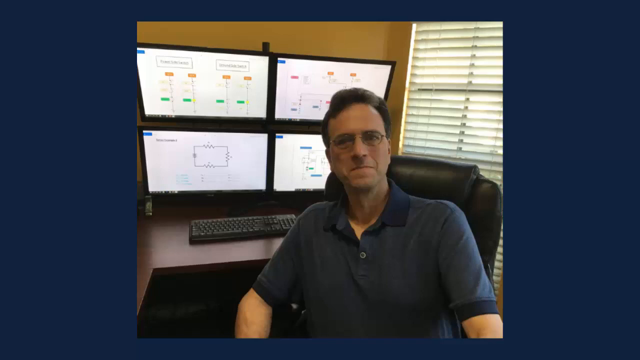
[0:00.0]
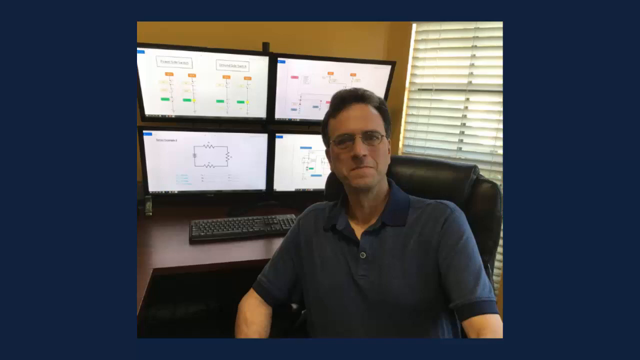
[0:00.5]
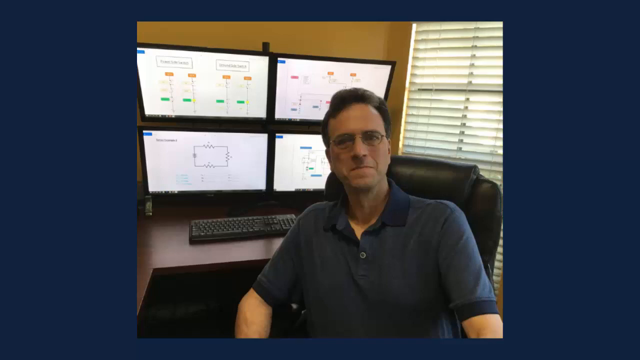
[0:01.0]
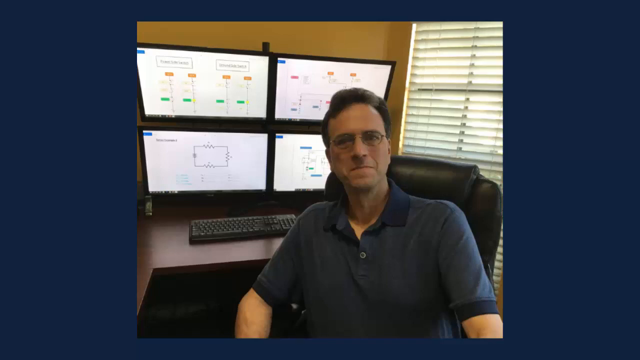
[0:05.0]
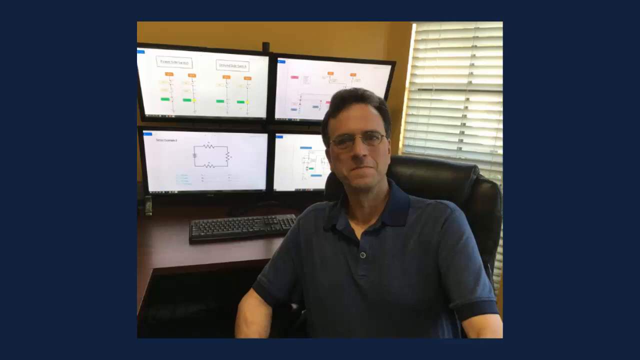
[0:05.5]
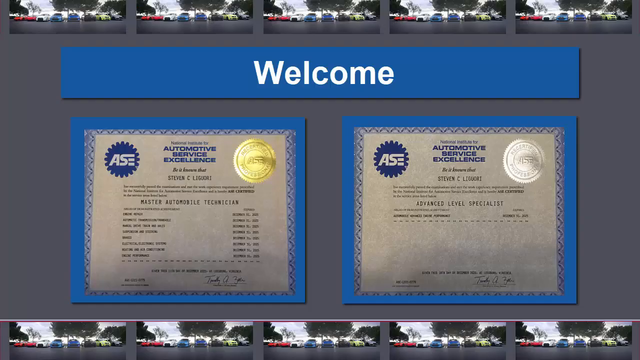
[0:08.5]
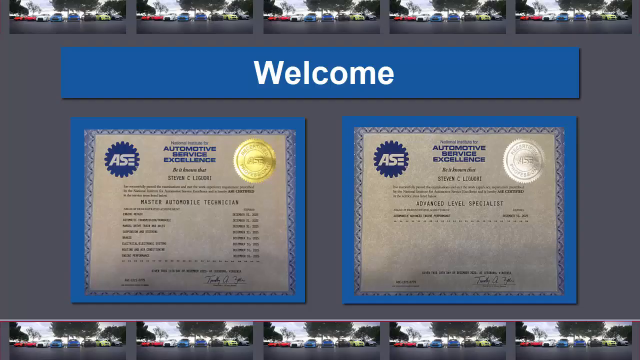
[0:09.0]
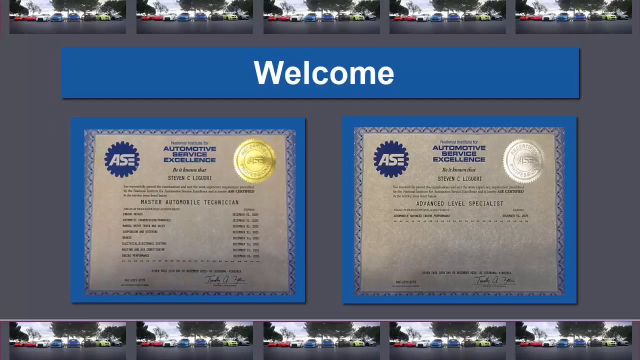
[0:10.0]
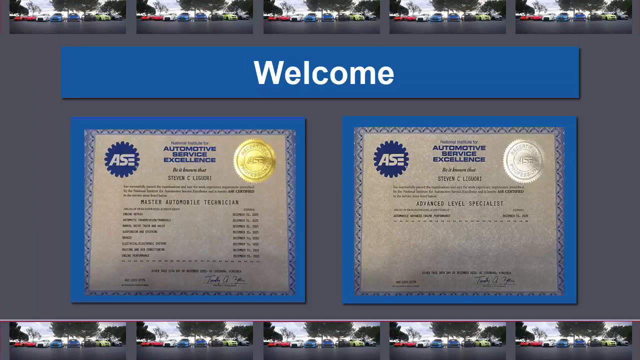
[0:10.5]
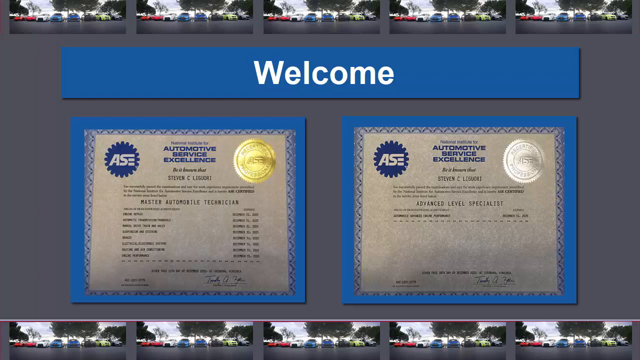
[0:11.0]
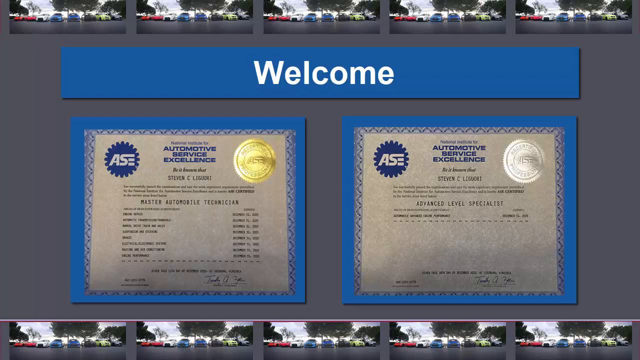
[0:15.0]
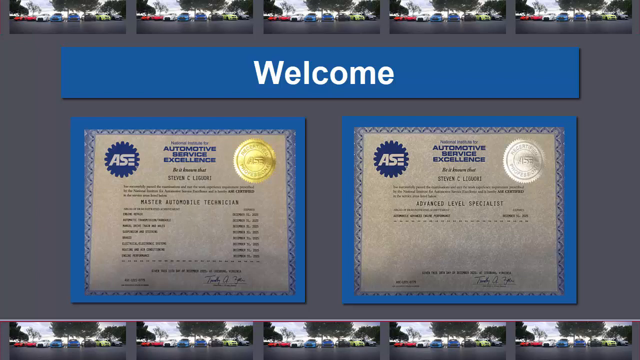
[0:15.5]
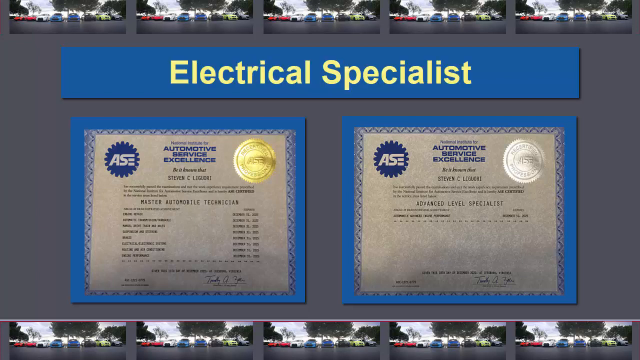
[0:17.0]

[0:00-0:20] The video opens with a blue border around a video of a man with four screens. The desk is brown, and there is a keyboard and a black chair. He wears a blue shirt and glasses and looks at the camera; the image is a freeze frame, and he is not moving. Next, an SAE certification certificate appears with the word "welcome." It has a blue border, with "automotive service" in blue lettering and everything else in black lettering; these are certificate diplomas. A gray background follows, with nothing else going on, and then the view returns to the man. The still photograph of him is now surrounded by a blue background. His computer monitor screens show orange and green colors on a white background. He looks like a man in his late 40s or early 50s, with blackish brown hair.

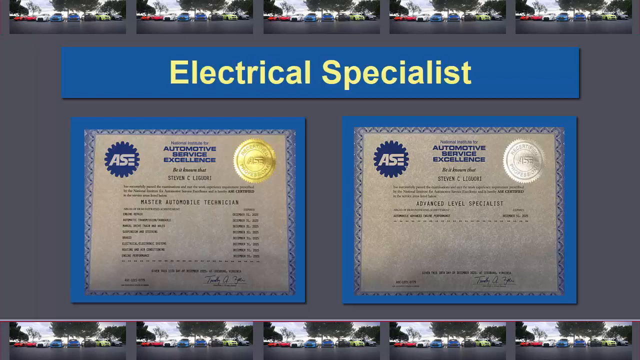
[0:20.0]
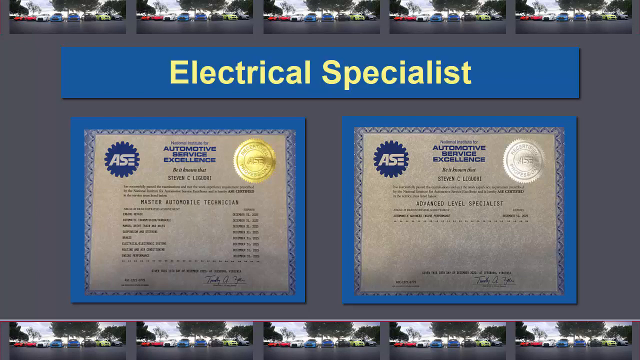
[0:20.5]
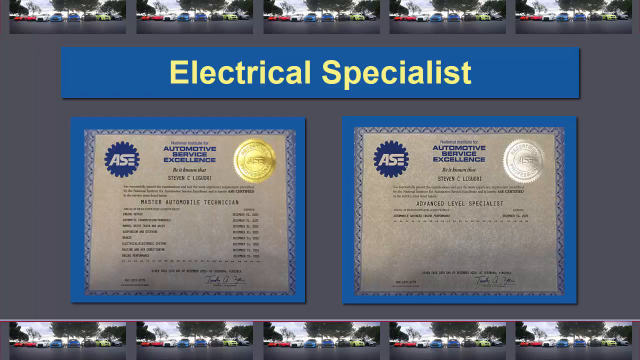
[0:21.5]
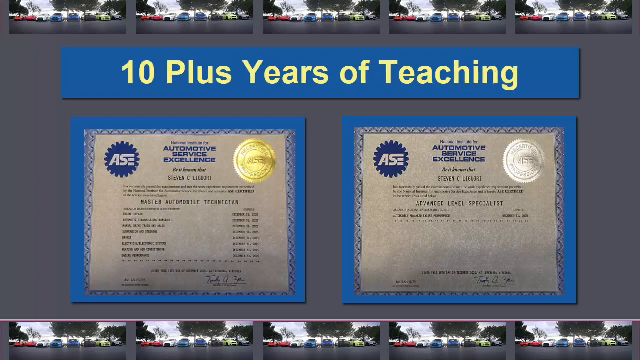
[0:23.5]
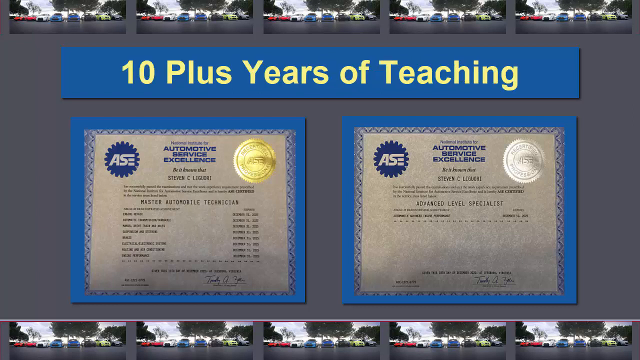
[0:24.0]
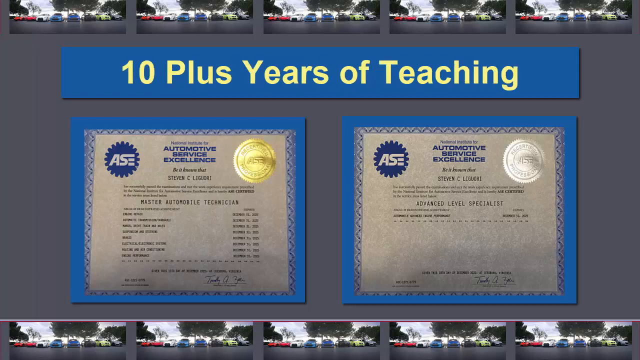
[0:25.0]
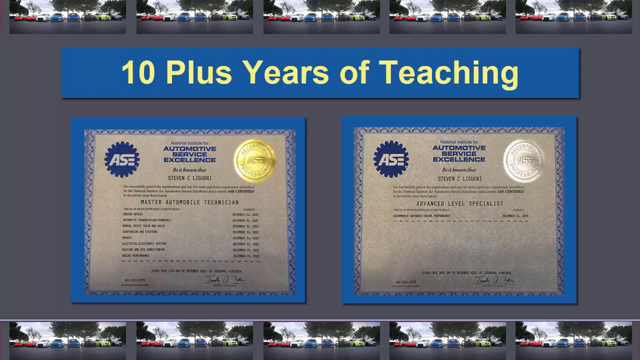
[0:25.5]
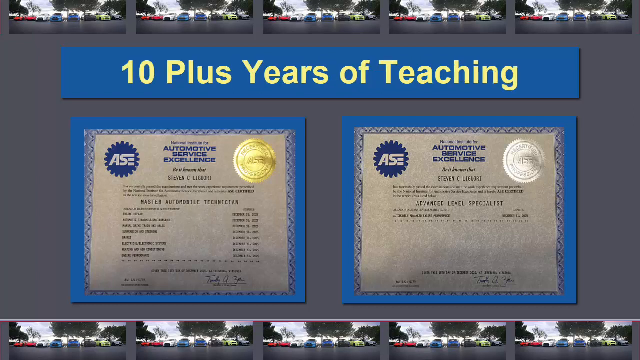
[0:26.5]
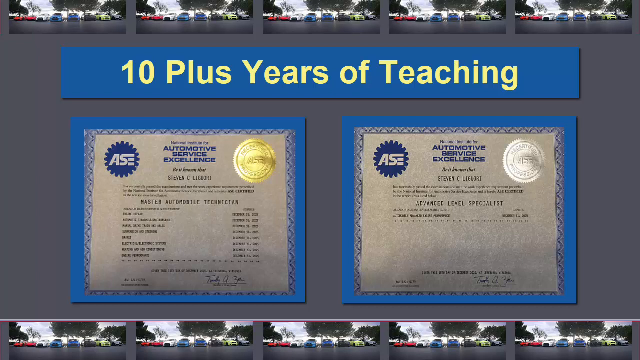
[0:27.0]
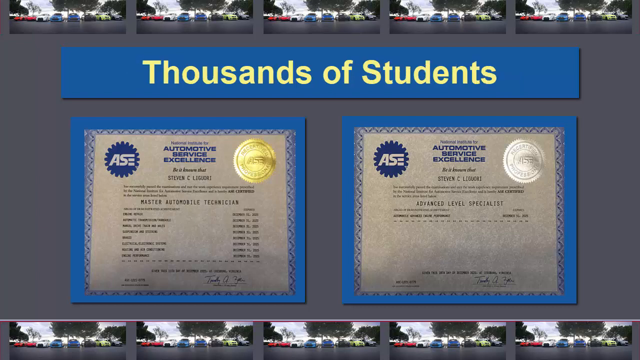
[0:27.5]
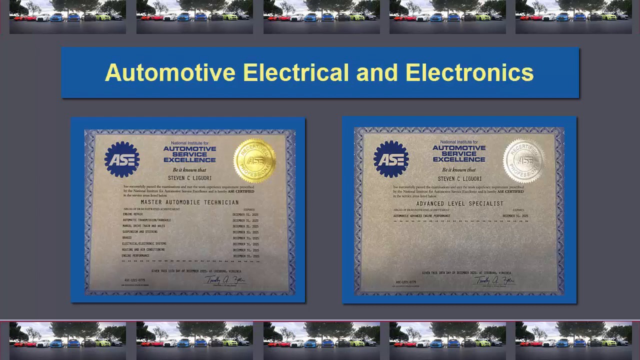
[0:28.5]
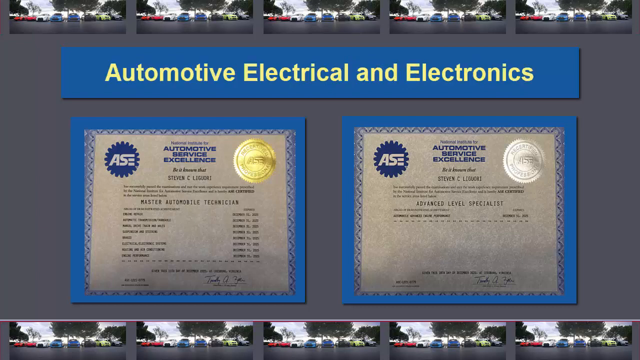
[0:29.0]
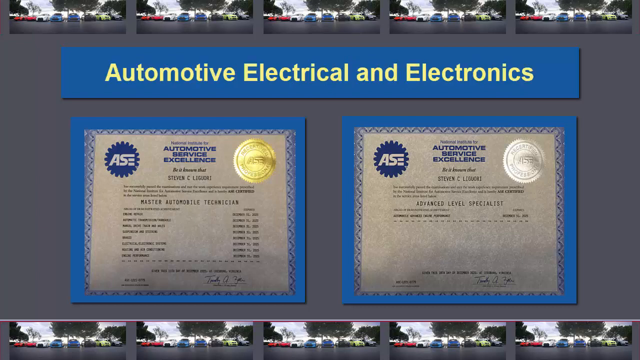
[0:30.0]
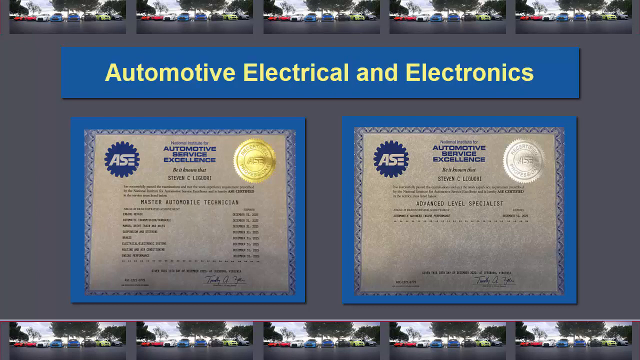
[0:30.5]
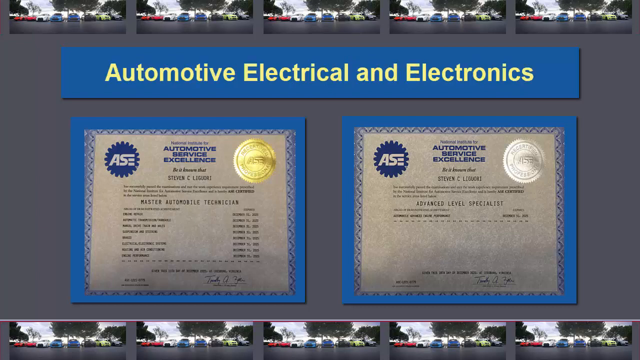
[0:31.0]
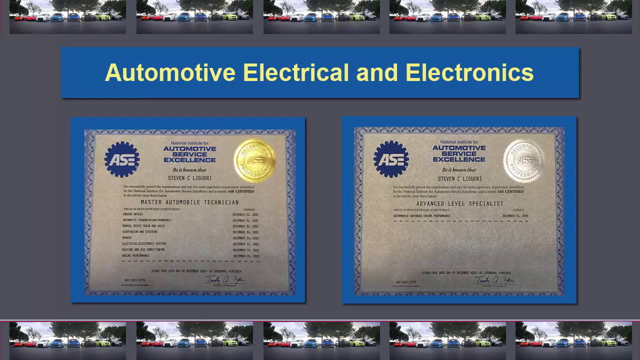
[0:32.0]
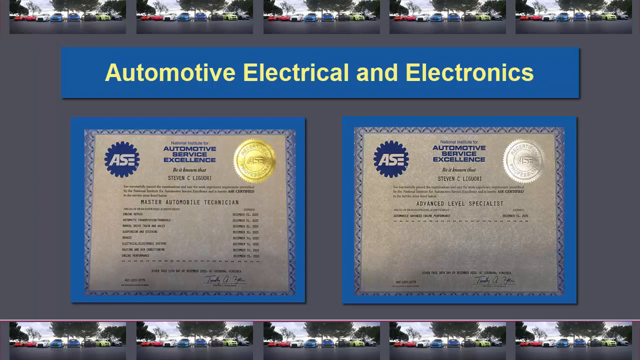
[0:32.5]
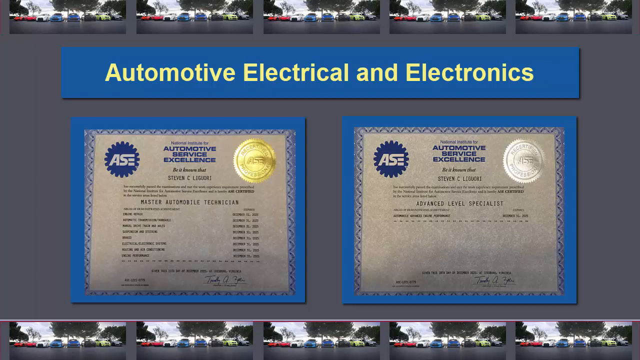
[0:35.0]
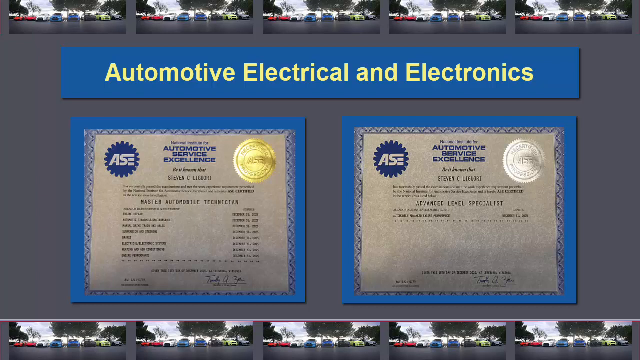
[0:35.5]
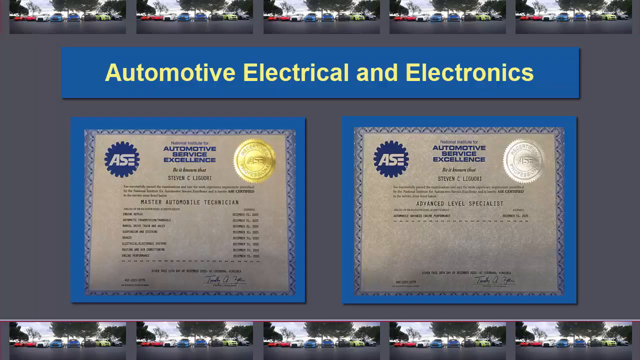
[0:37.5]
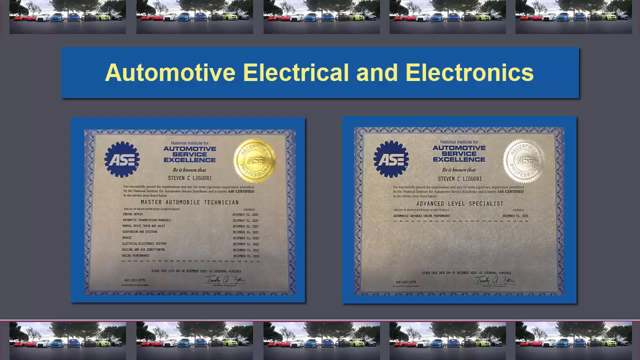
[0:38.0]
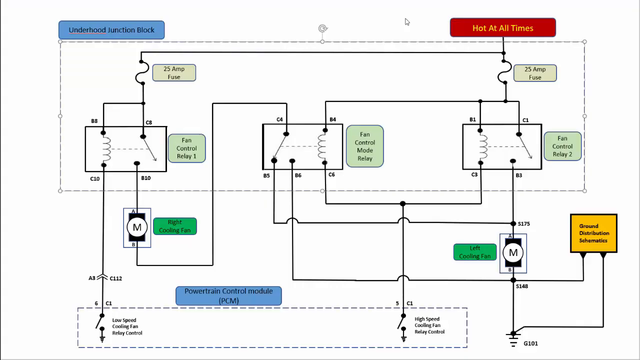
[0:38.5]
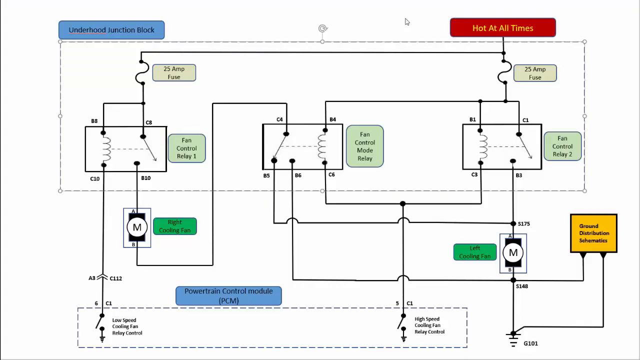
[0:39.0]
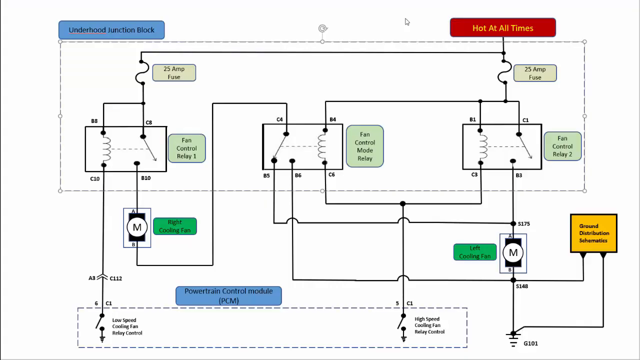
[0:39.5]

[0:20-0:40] The screen reads "electrical specialist" and shows the ASC certifications. The writing "automotive service excellence" is in blue. In the symbol, SAE is in a whitish tan color, and the surrounding circle, which looks like gears, is blue. The certificate is on a blue background. Stats then appear, reading "thousands of students" and "automotive, electrical, and electronics." Next comes a wiring diagram, somewhat like an electrical circuit diagram, showing items such as "fan control module," "mode relay," "fan control relay number two," "25 amp fuse" and "hot at all times." It includes an illustration of a wire. Some things are in green, some yellow, some light green, and one is blue. There is also a "powertrain control module PCM."